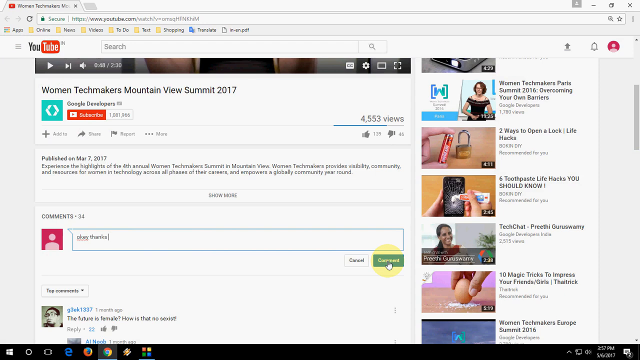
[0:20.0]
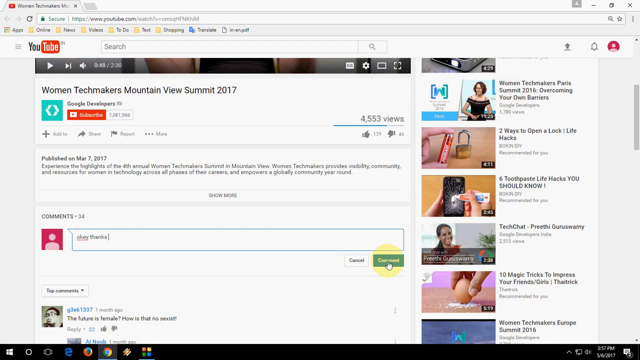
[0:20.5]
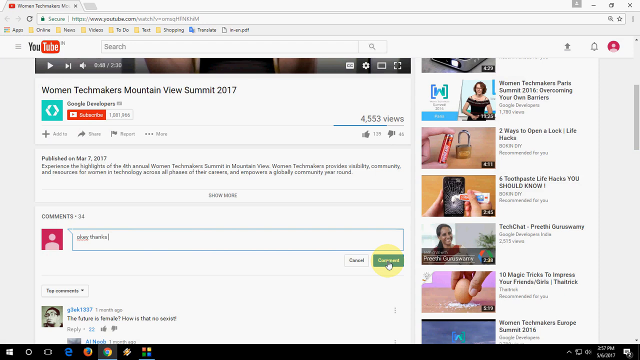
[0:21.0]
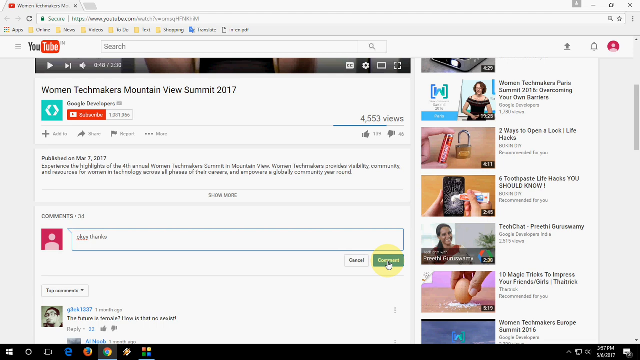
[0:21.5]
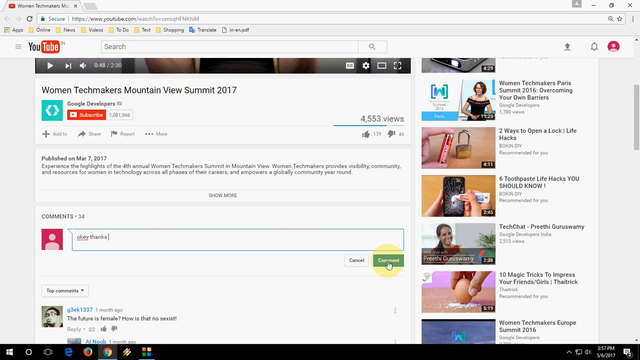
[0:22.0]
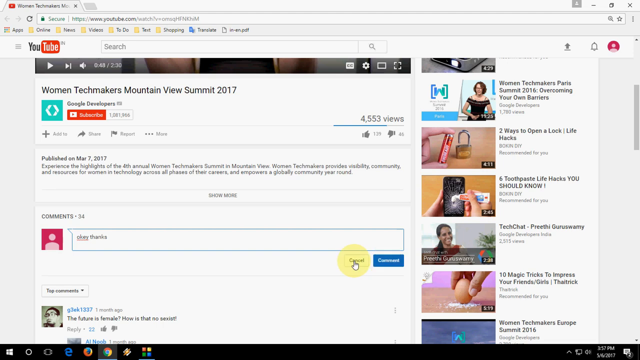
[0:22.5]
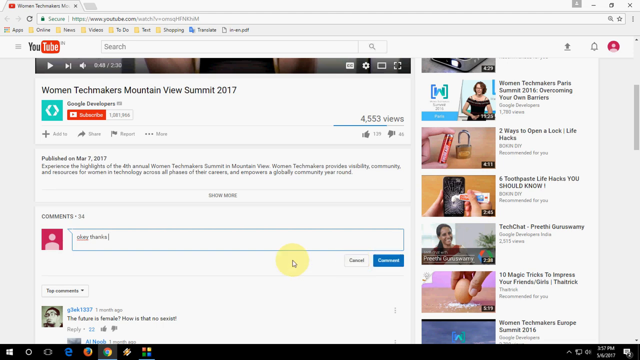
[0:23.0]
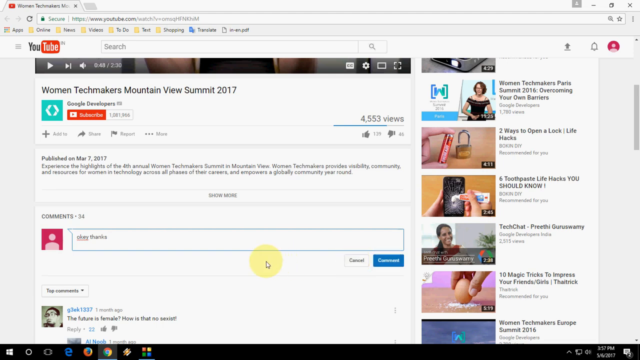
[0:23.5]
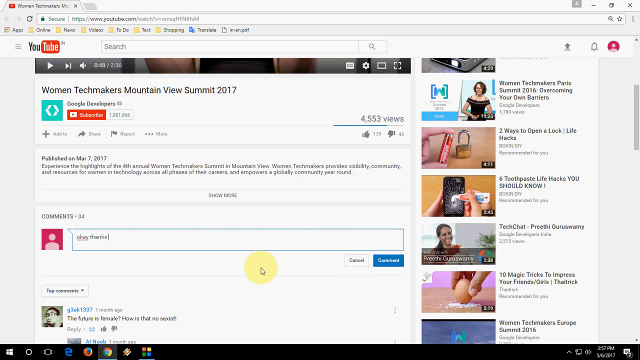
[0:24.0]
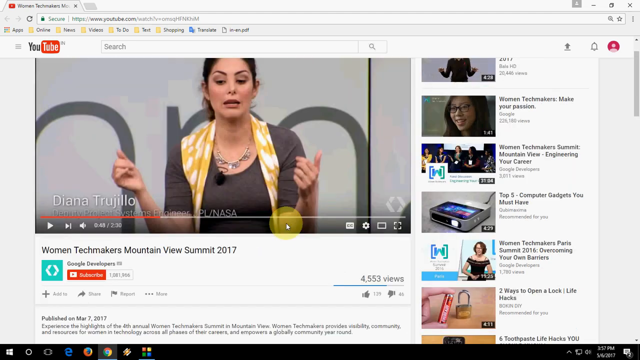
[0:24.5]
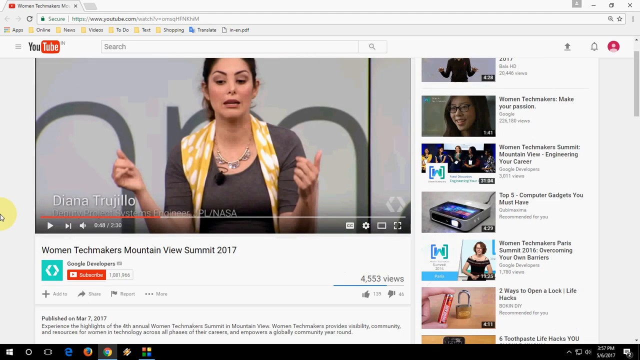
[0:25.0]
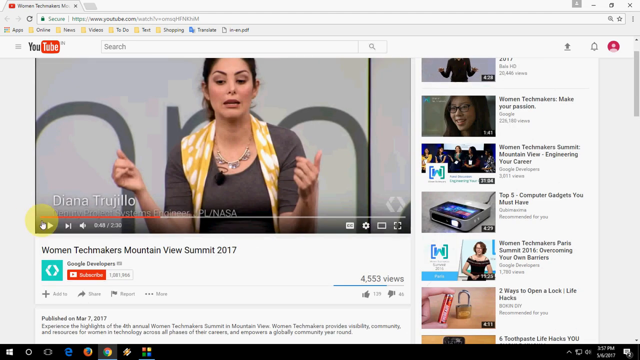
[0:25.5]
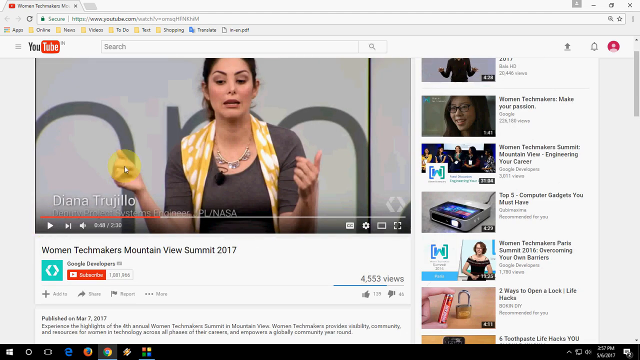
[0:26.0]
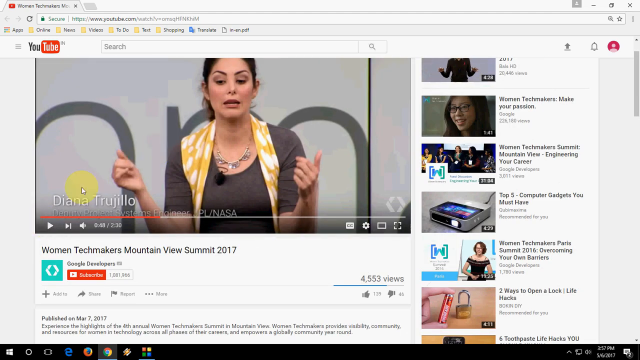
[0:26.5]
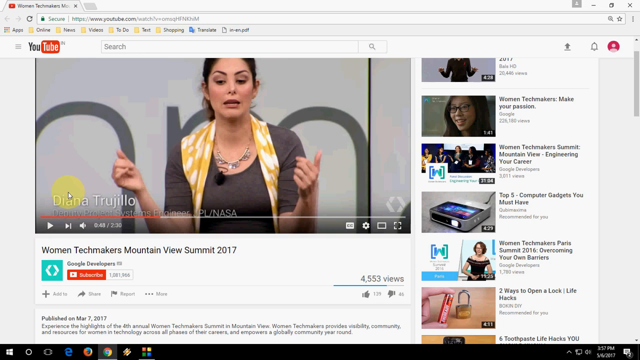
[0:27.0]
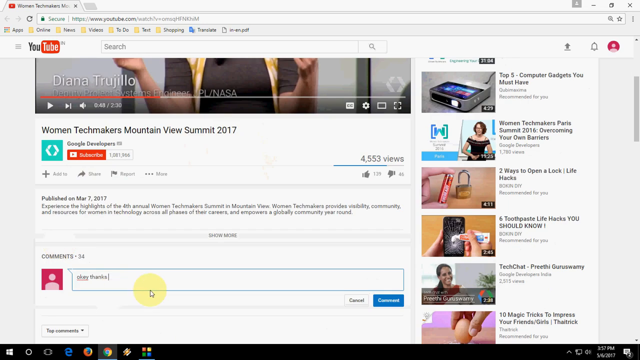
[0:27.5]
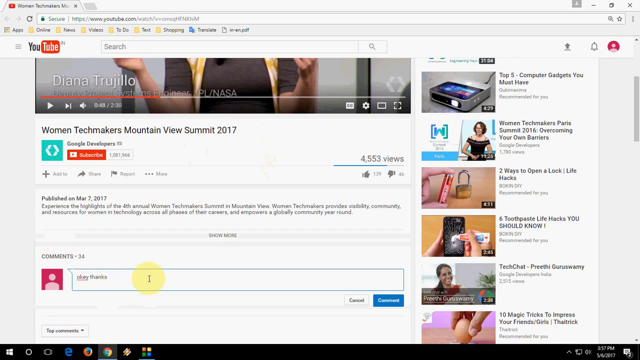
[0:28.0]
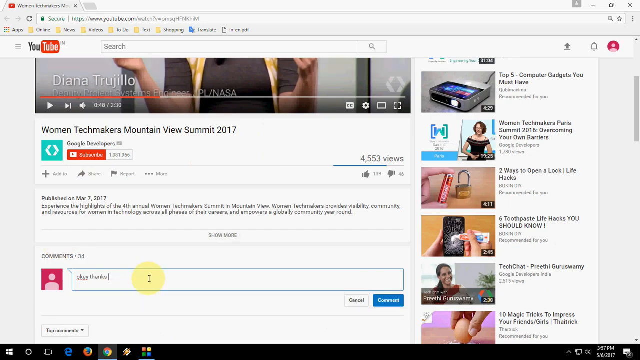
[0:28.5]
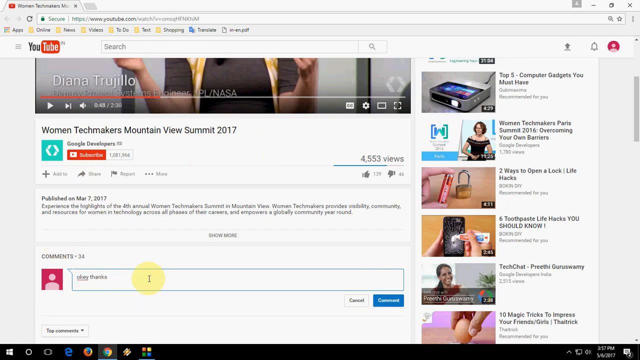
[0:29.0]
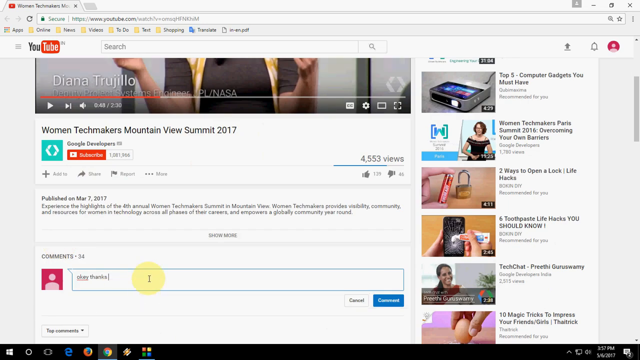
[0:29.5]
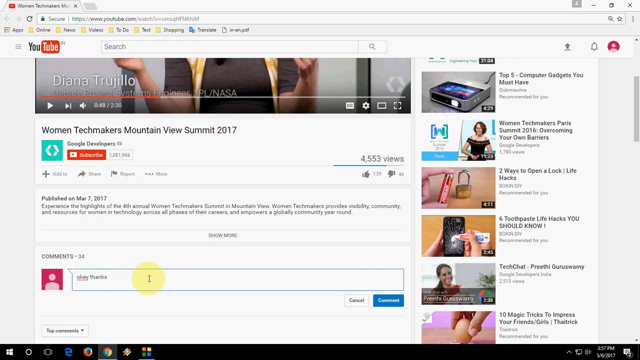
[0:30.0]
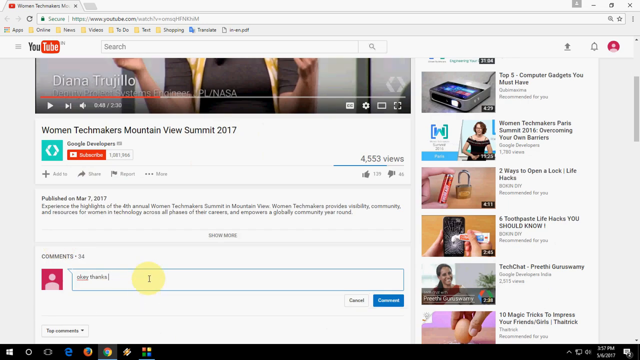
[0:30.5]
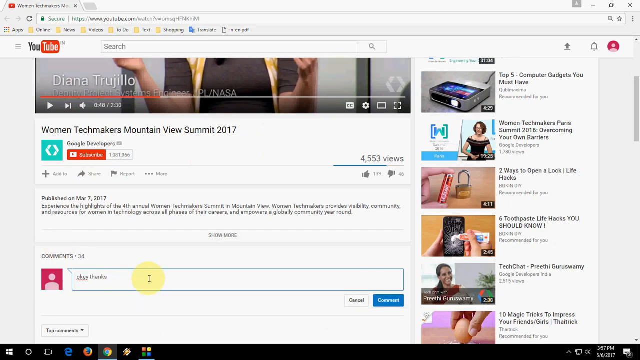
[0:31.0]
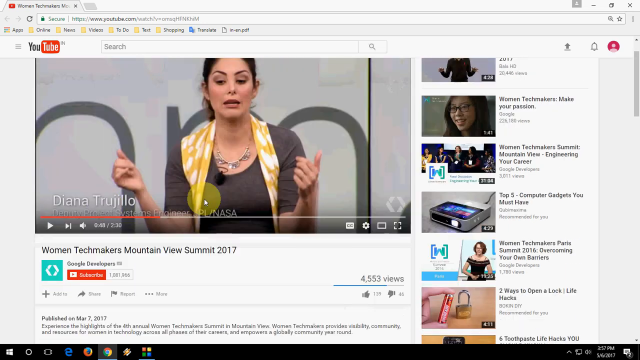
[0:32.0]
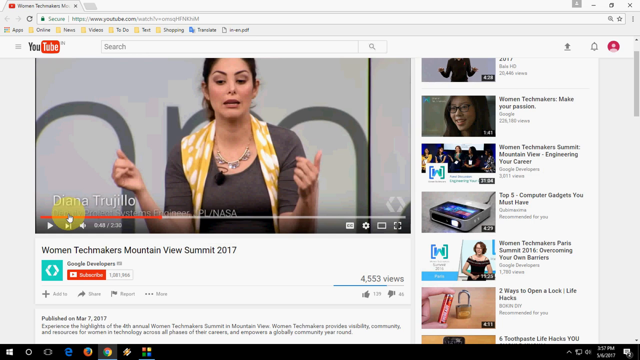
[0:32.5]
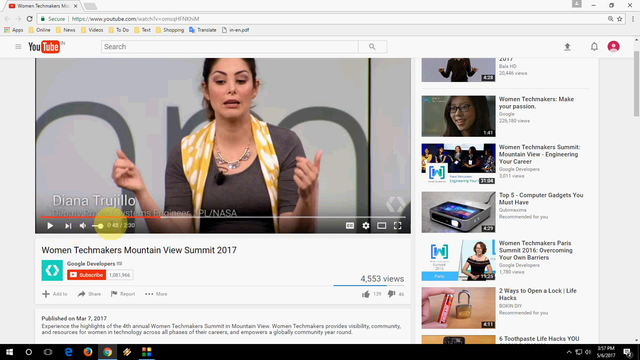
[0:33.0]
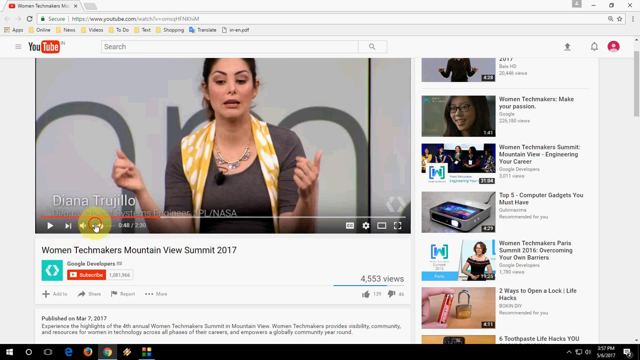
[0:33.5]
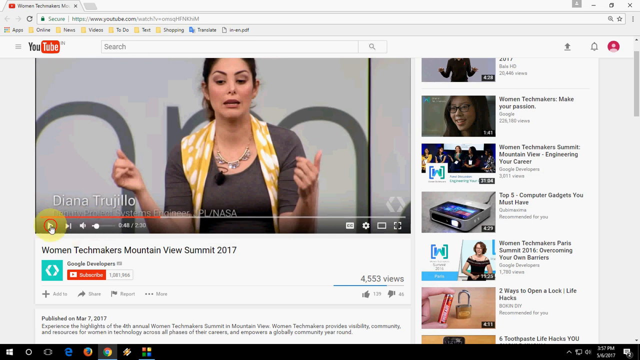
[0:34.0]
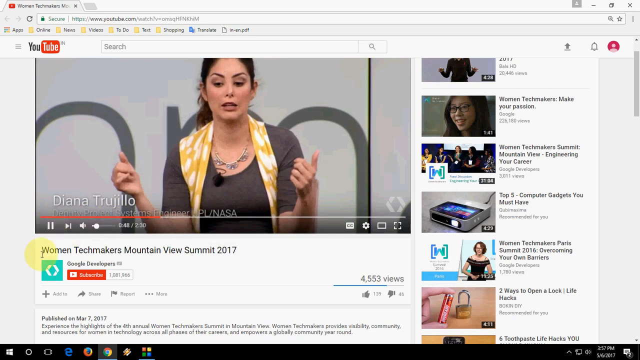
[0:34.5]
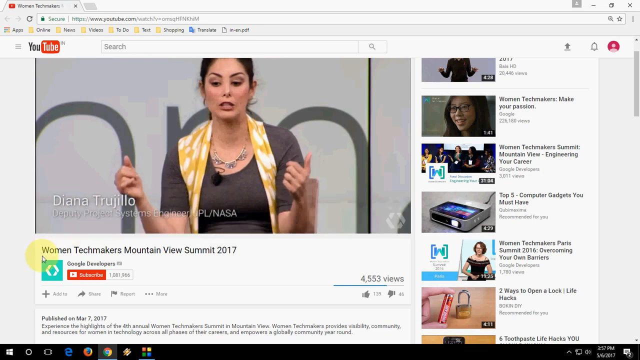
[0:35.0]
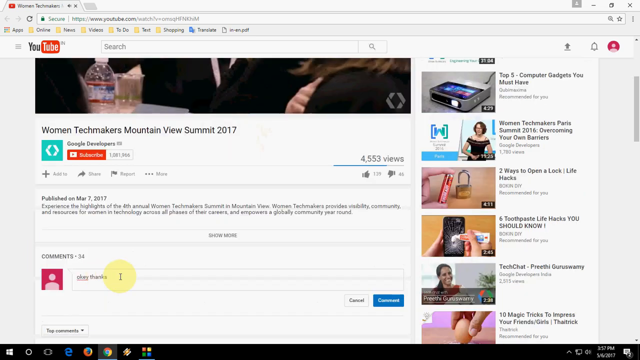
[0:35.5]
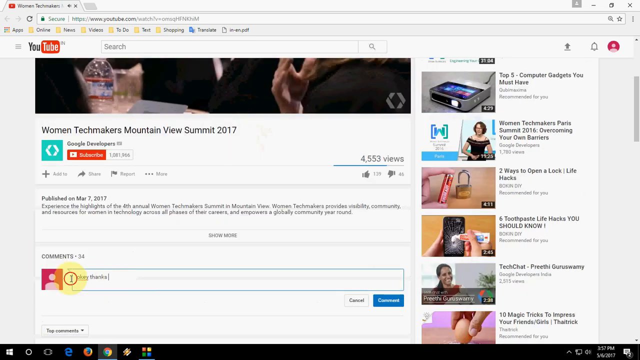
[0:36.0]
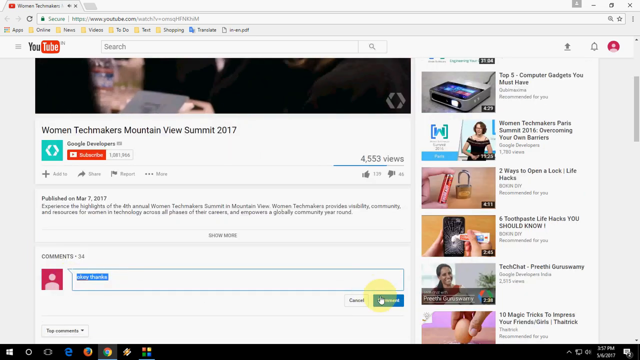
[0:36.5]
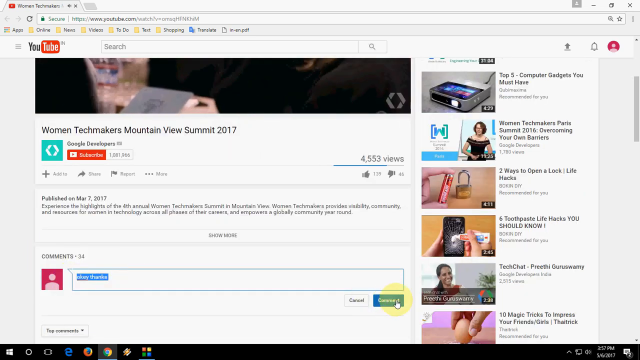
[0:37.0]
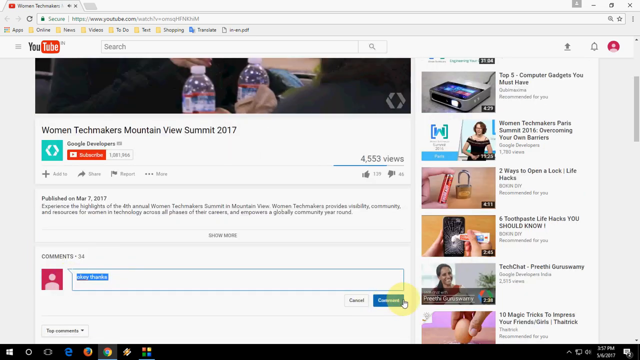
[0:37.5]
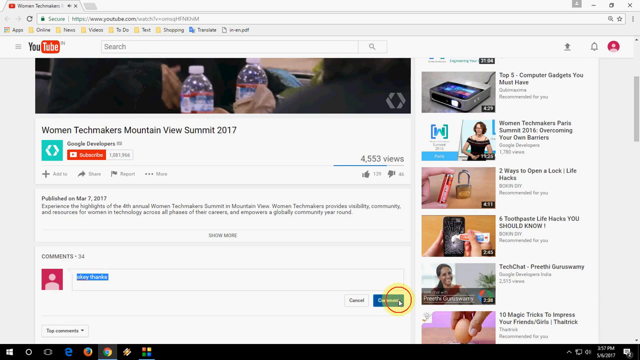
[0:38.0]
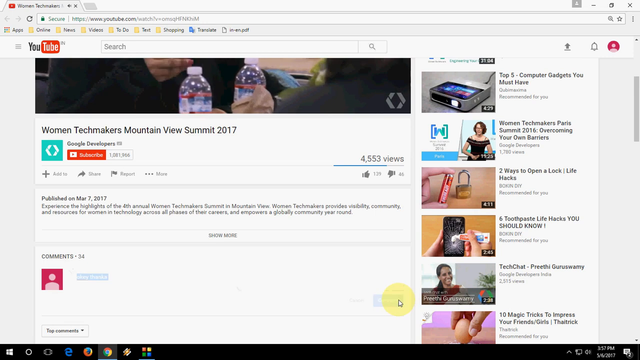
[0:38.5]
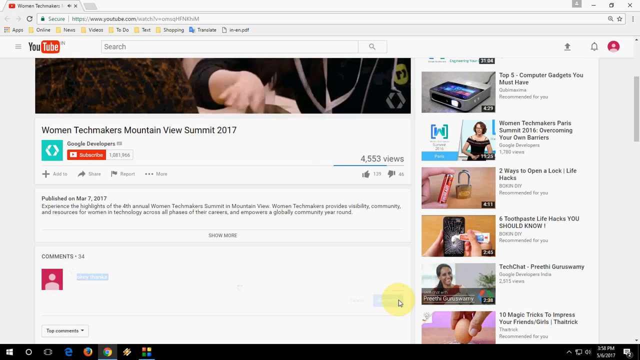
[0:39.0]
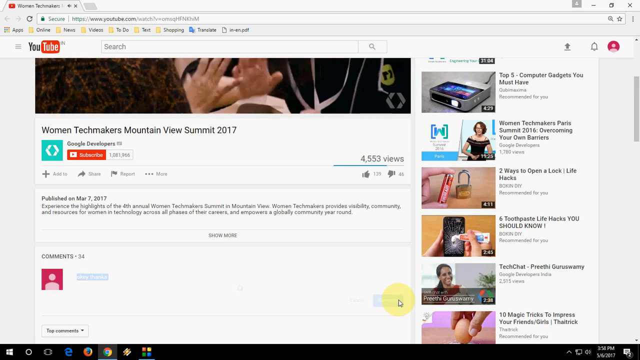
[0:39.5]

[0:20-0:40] The screen capture continues with someone looking at a YouTube video. The cursor is highlighted with a yellow circle and a red outline to show when they click. The person controlling the cursor types a comment on the YouTube video, scrolls up to look at the video, which is the Women Techmakers Mountain View Summit of 2017, then scrolls back down and submits the comment. The YouTube video is not in full screen; it is in the standard viewer, with suggested videos visible on the right-hand side. The browser is possibly Safari, and it is all in bright white with no dark mode. Files are visible along the top of the browser.